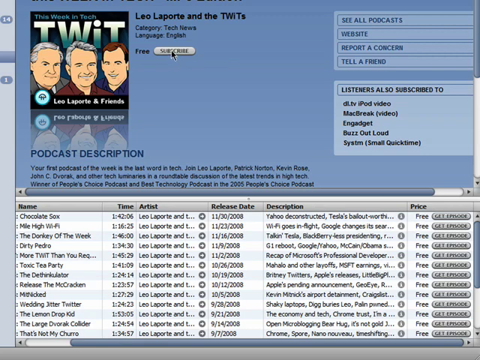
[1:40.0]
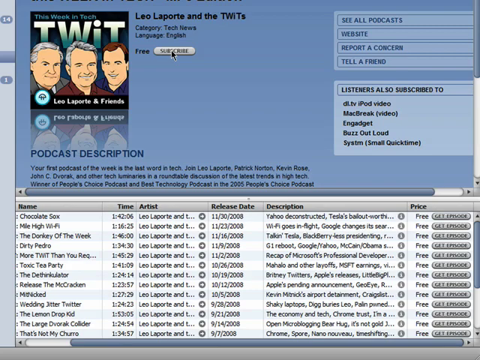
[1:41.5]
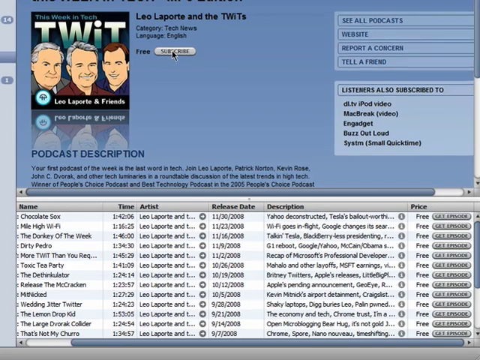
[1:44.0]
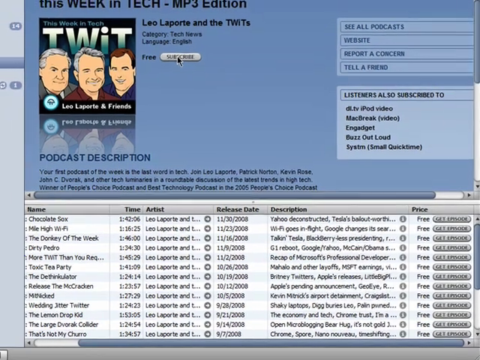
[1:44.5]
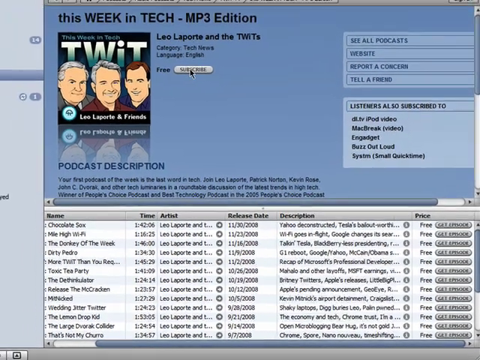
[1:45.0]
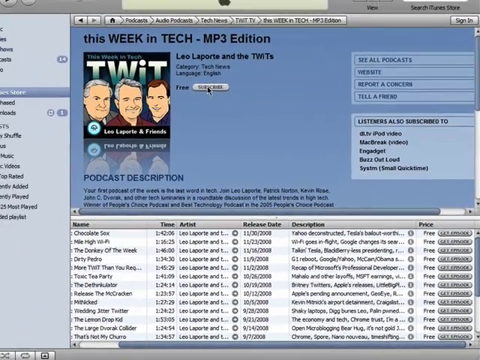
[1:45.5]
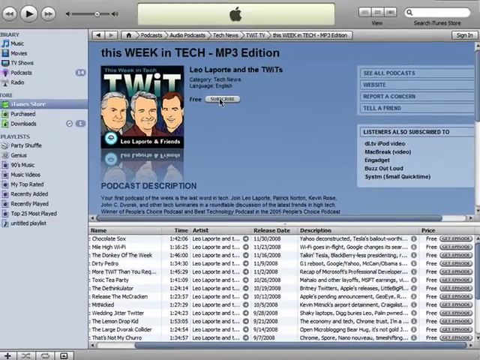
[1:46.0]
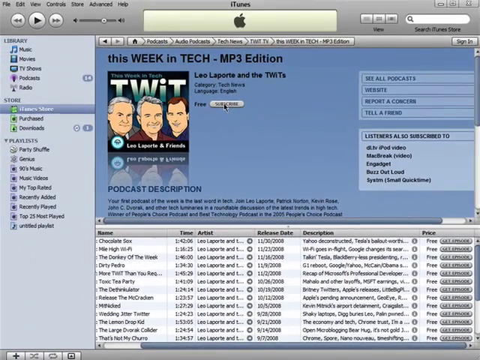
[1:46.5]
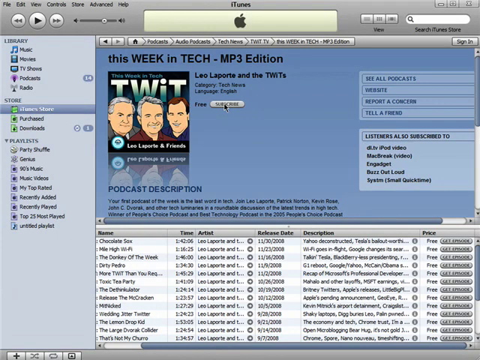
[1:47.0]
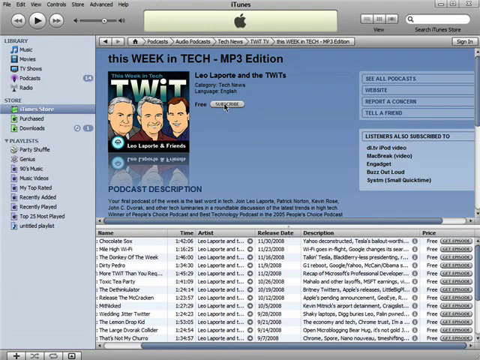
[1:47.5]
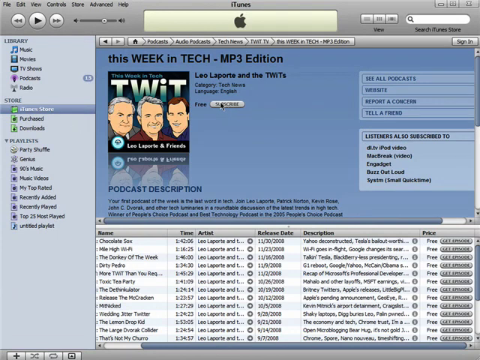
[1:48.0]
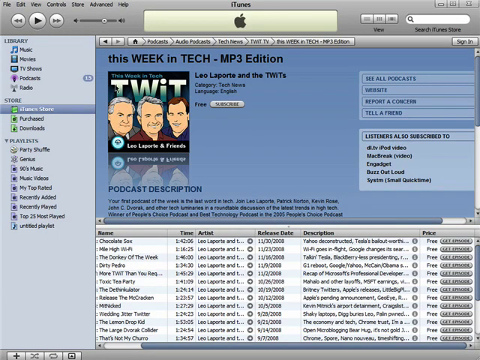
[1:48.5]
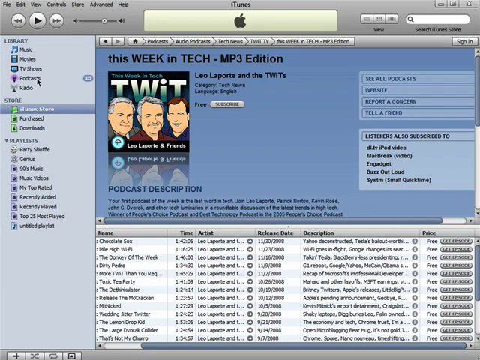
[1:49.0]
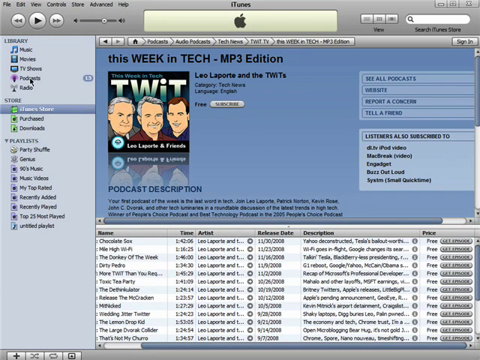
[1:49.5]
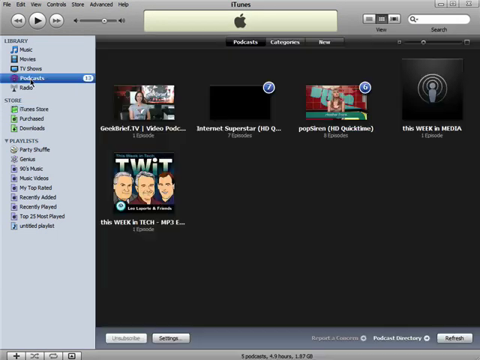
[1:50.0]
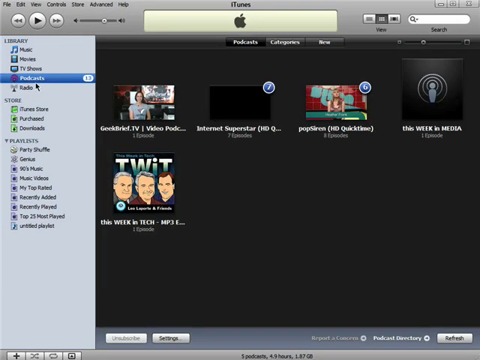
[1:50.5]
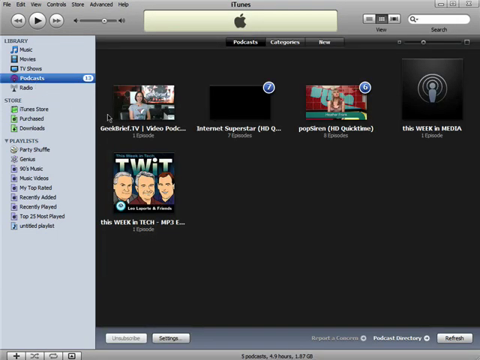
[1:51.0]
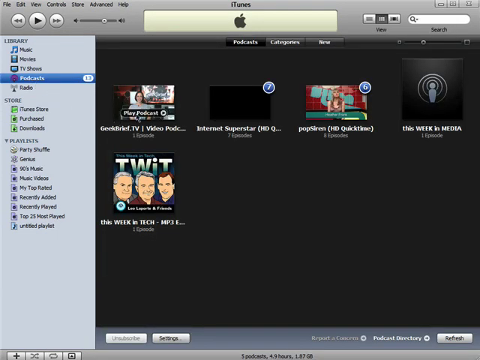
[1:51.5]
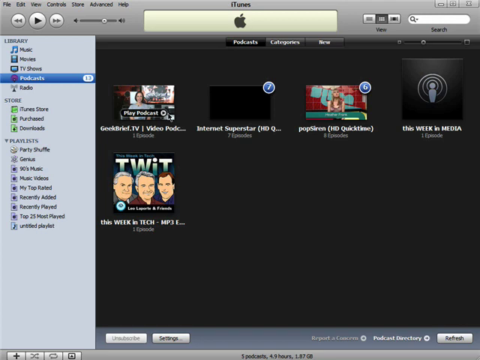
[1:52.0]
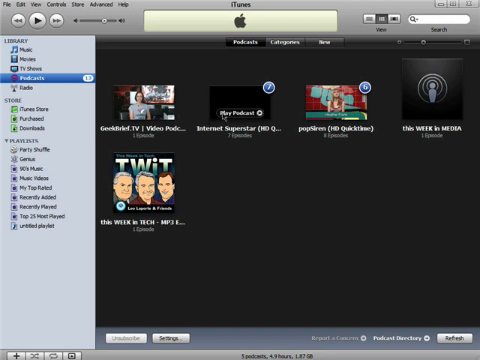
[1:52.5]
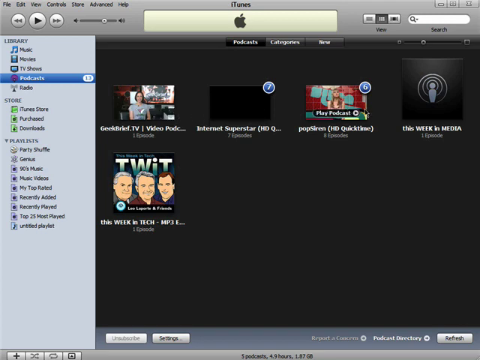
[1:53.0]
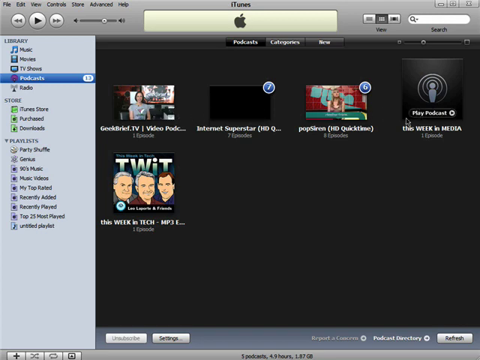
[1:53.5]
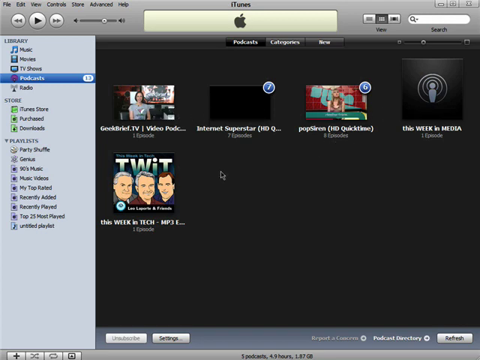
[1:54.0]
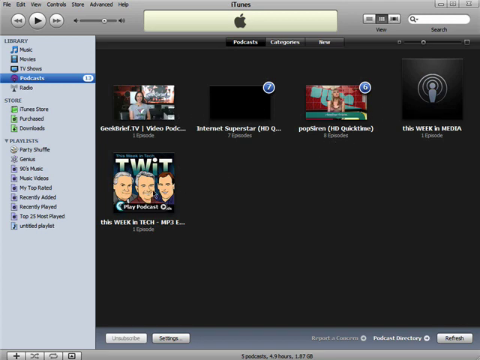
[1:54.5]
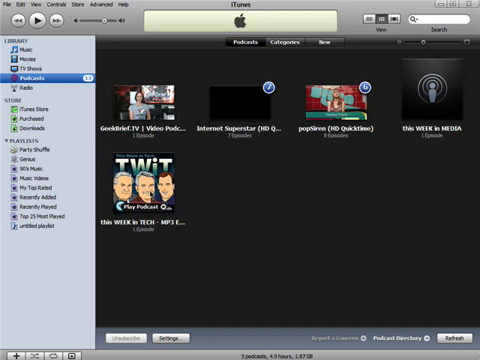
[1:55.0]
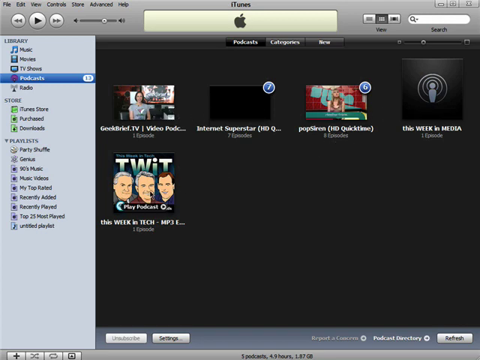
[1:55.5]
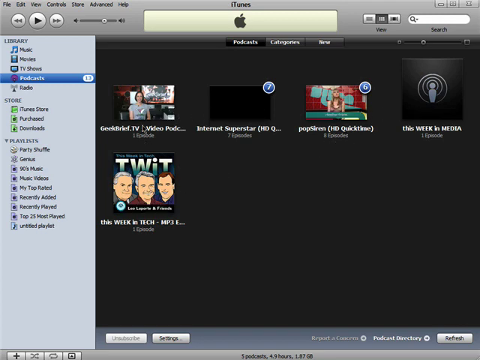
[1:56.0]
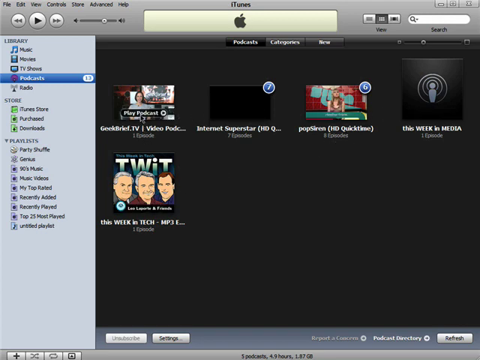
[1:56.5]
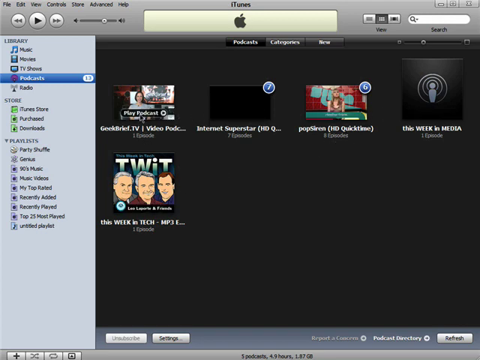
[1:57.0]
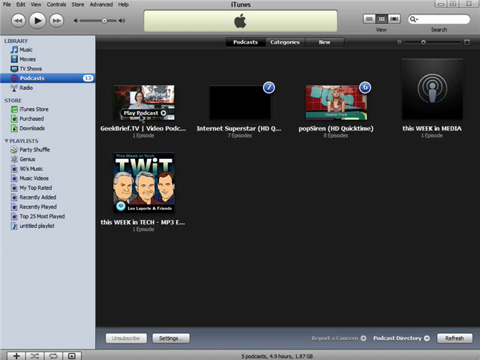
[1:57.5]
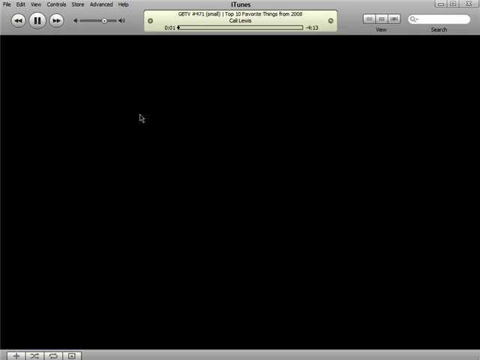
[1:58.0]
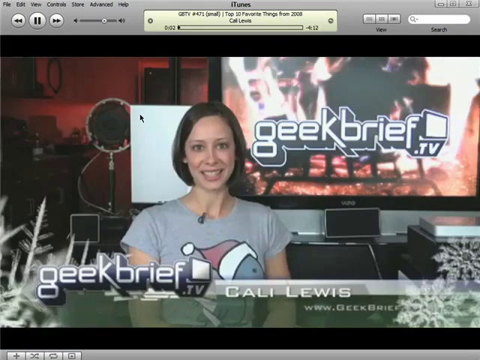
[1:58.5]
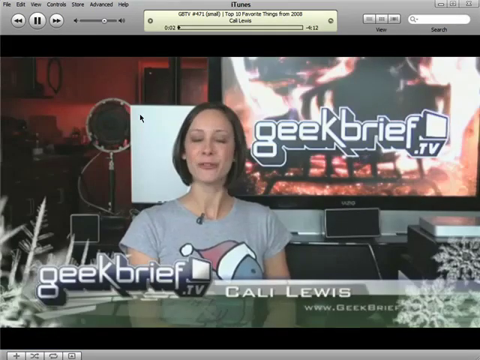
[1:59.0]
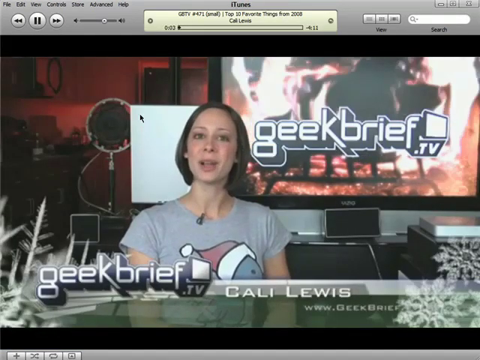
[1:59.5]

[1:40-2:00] The TWIT podcast page is still shown, now a little zoomed in, making options on the right side of the screen more visible: apparently see all podcasts, website, report a concern, and tell a friend. There is also a section for listeners also subscribe to, which looks like it contains other podcasts, possibly of a similar style or theme. The person controlling the cursor then selects a podcast from the library, and other podcasts appear with their logos; these look to be more tech-themed podcasts along the lines of TWIT. Next, a short video is selected that says "geek brief with Callie Lewis," showing a woman speaking with some graphics.